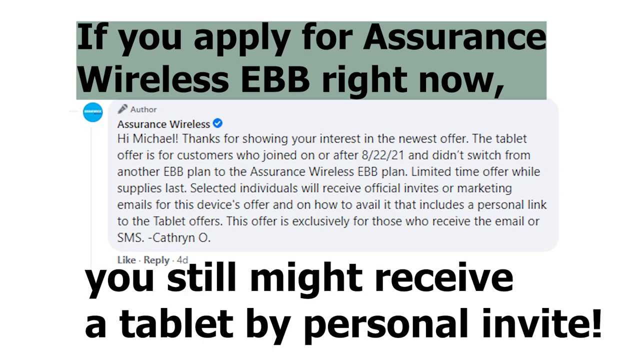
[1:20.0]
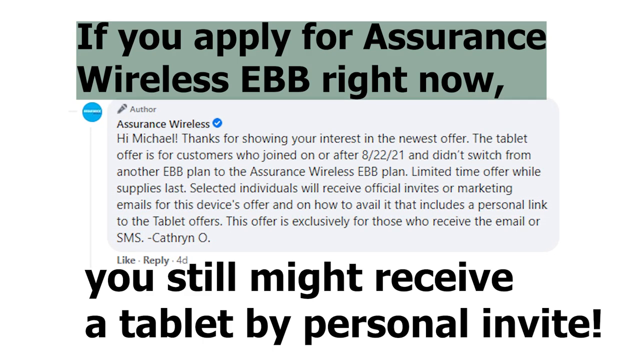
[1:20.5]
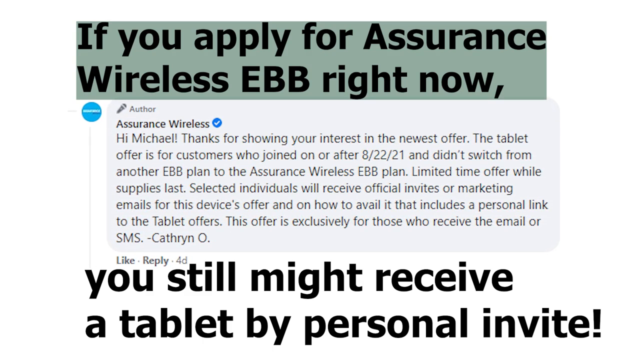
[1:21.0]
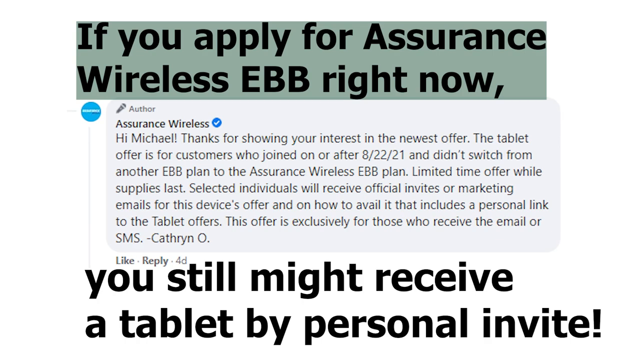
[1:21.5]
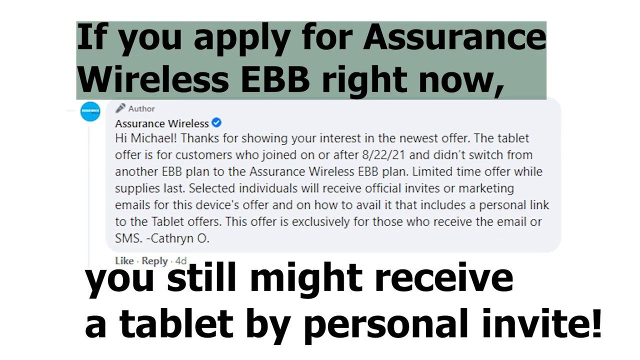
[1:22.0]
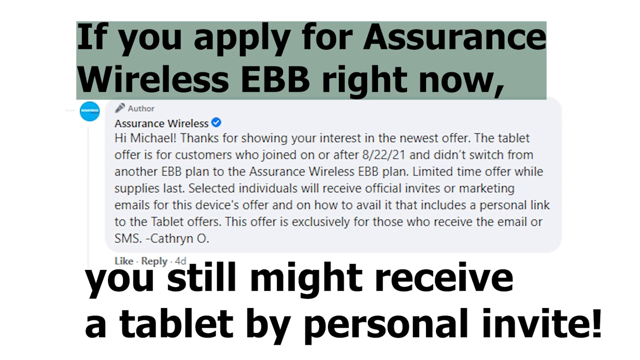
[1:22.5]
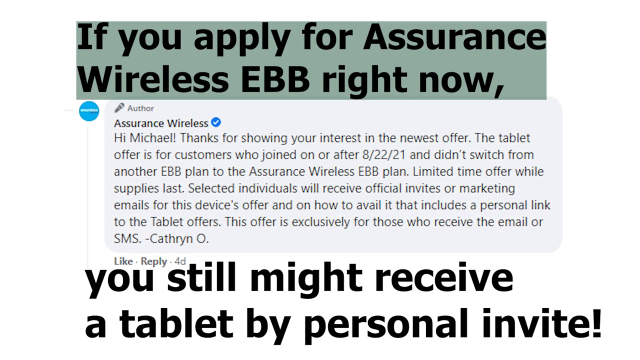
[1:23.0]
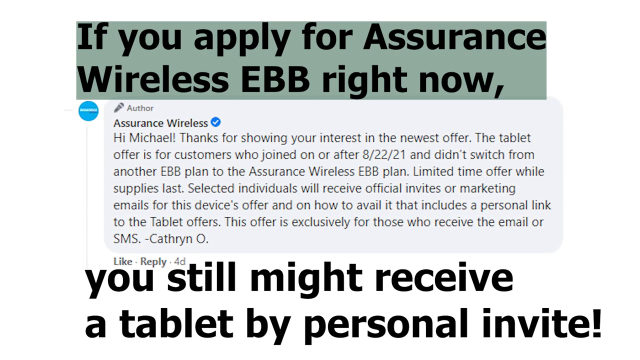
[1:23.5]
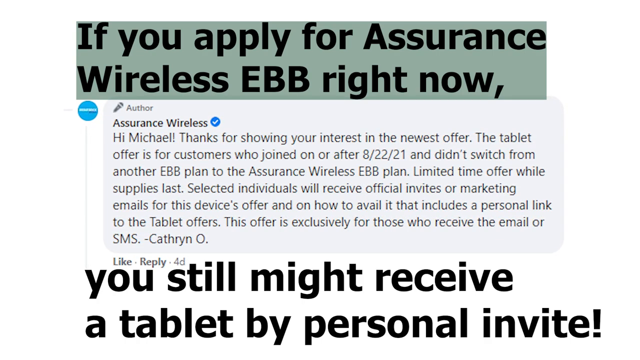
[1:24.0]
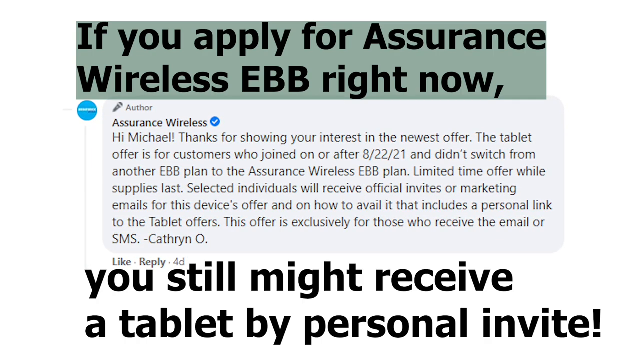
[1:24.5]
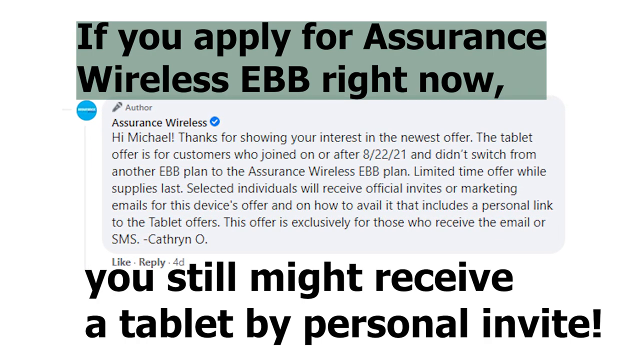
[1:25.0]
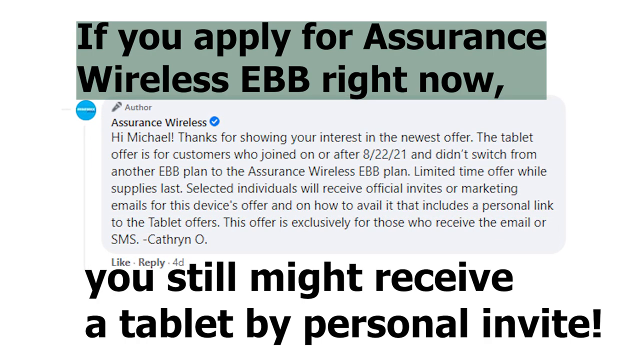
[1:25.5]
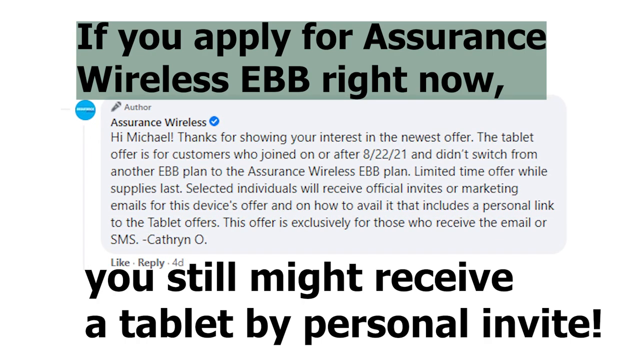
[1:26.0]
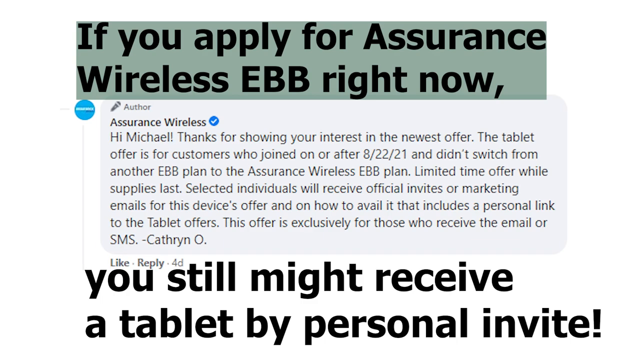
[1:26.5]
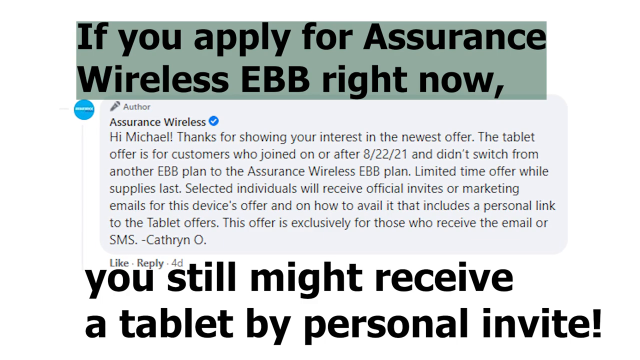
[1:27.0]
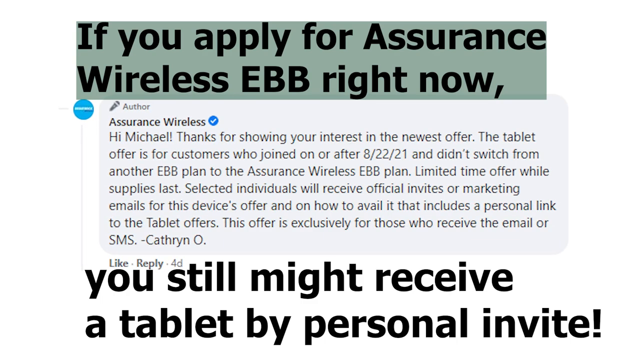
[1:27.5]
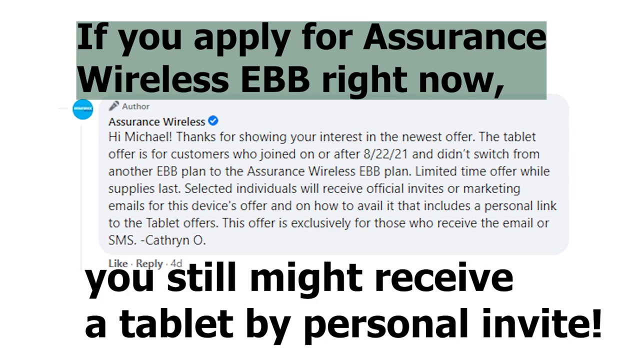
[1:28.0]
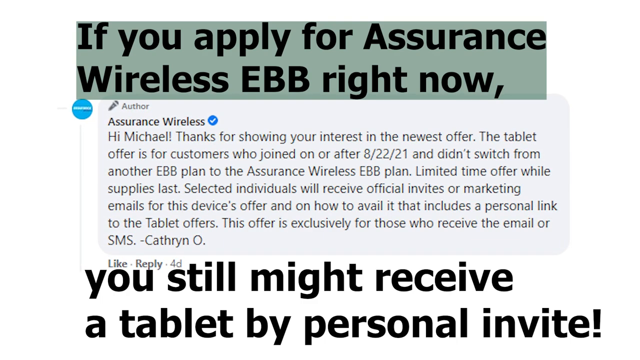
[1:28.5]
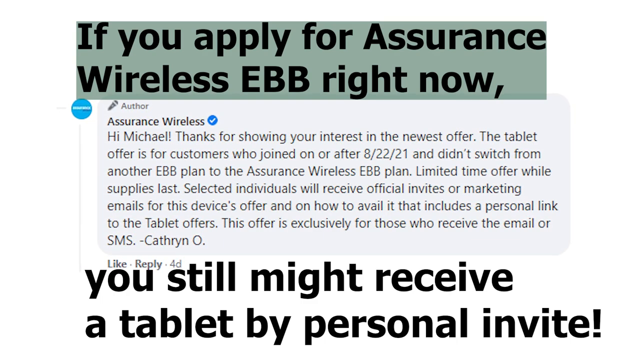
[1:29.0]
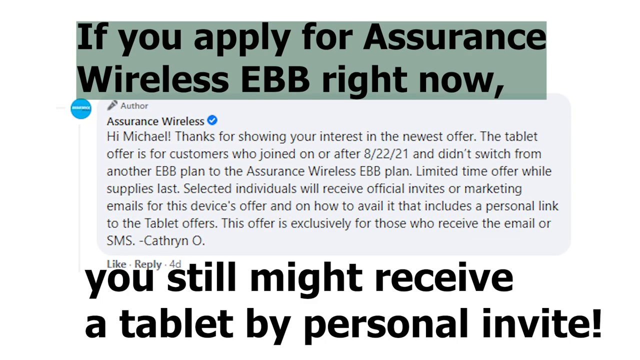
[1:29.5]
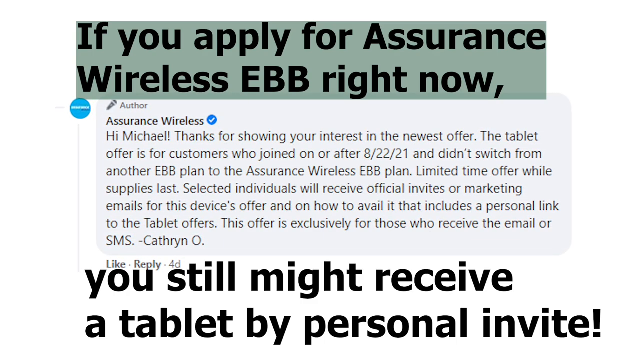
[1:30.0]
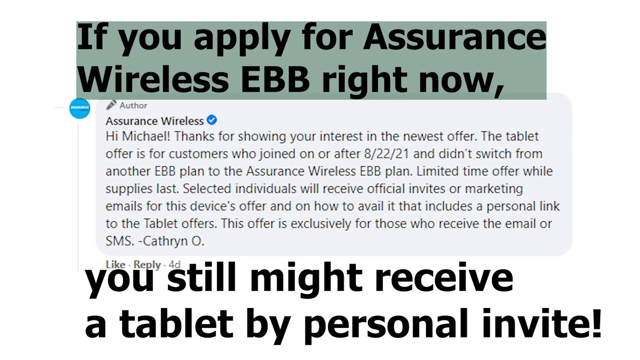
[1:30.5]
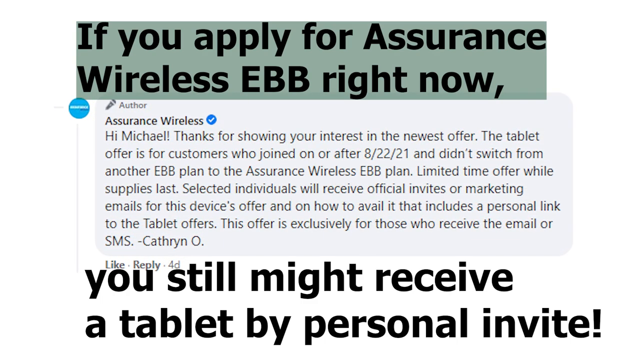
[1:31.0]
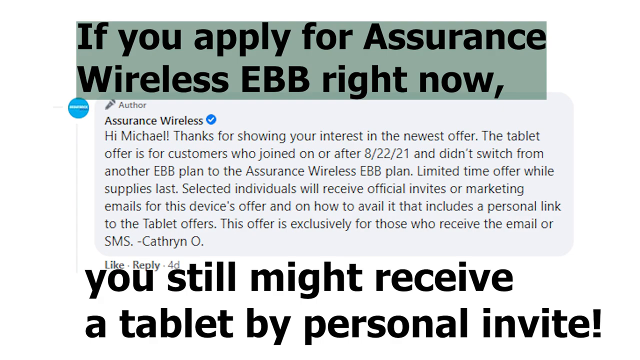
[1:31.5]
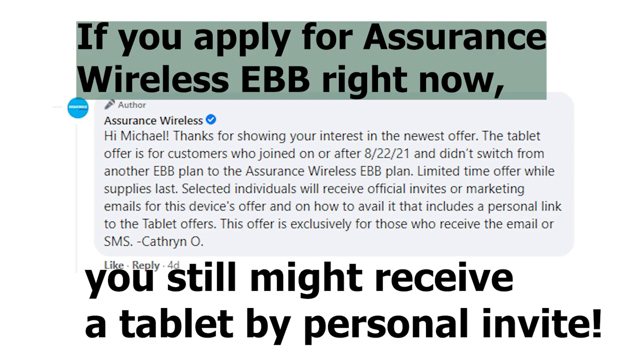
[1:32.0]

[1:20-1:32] The same message from Assurance Wireless to Michael is highlighted, now with additional overlay text placed at the top and bottom of the image. The text at the top has a green background behind it for readability, while the text at the bottom does not. The overlay reads: "If you apply for Assurance Wireless EBB right now, you might still receive a tablet by personal invite!" A blue check mark next to the author name Assurance Wireless verifies the account.